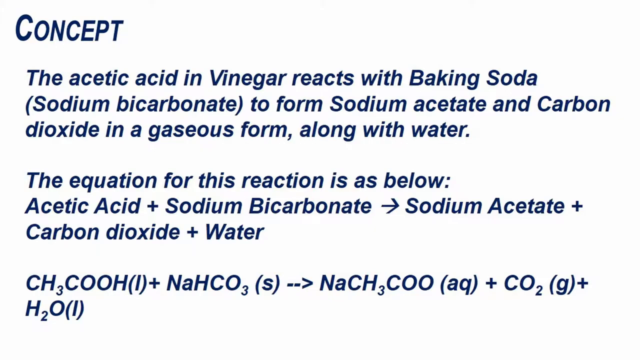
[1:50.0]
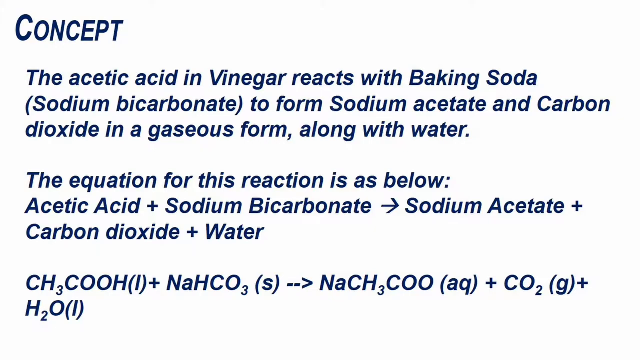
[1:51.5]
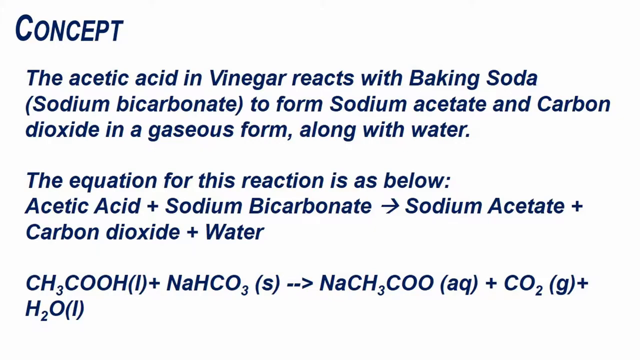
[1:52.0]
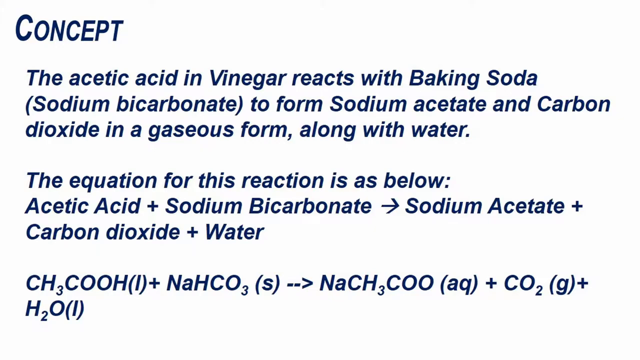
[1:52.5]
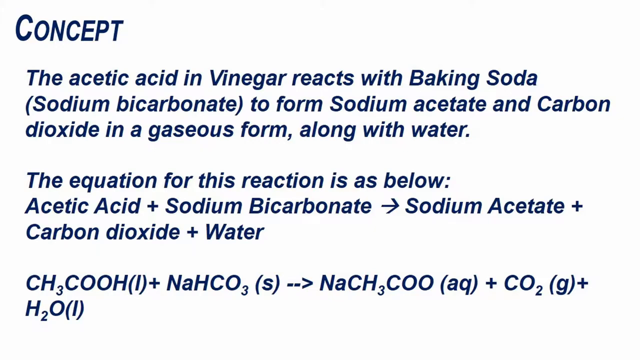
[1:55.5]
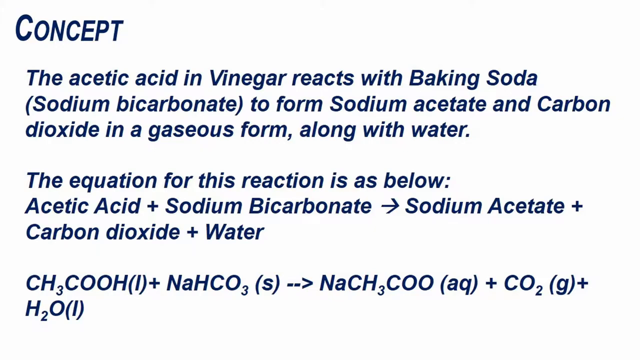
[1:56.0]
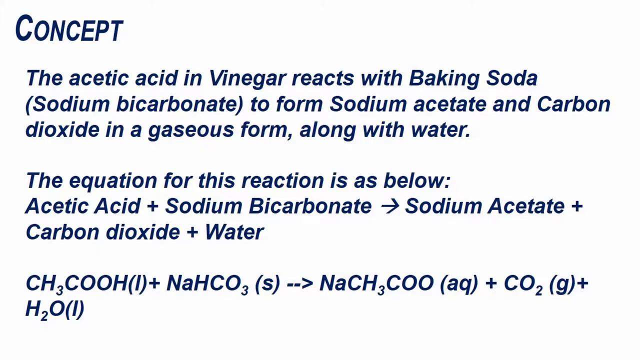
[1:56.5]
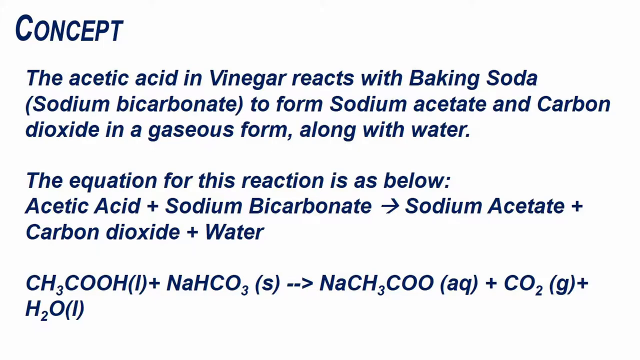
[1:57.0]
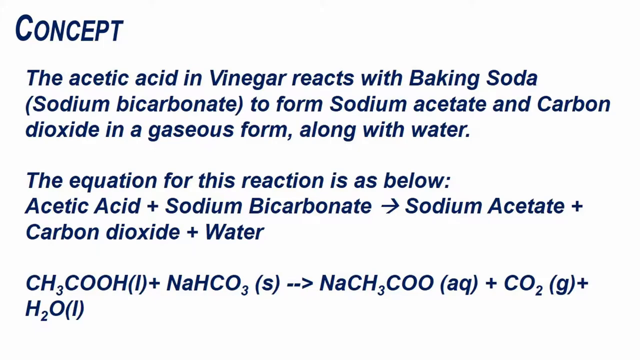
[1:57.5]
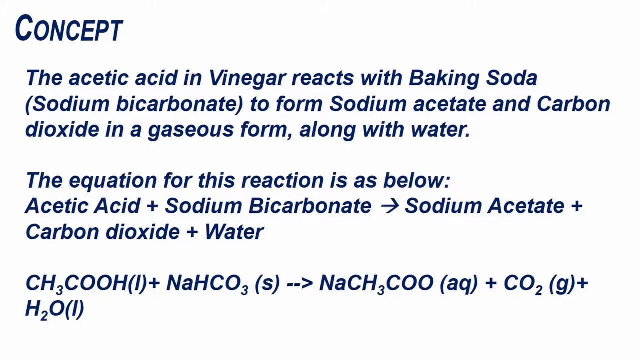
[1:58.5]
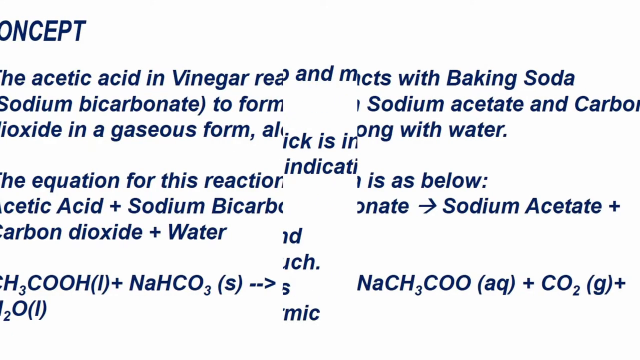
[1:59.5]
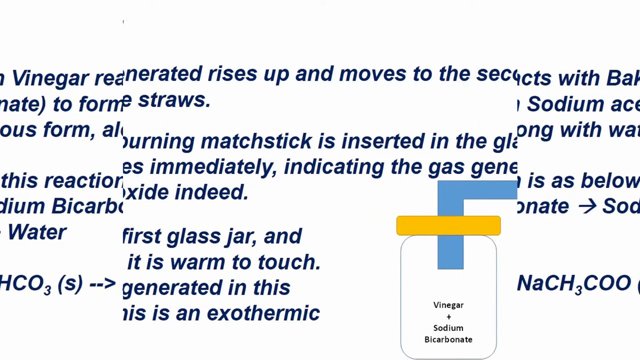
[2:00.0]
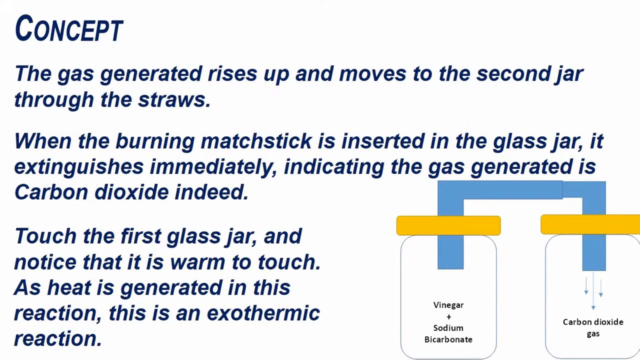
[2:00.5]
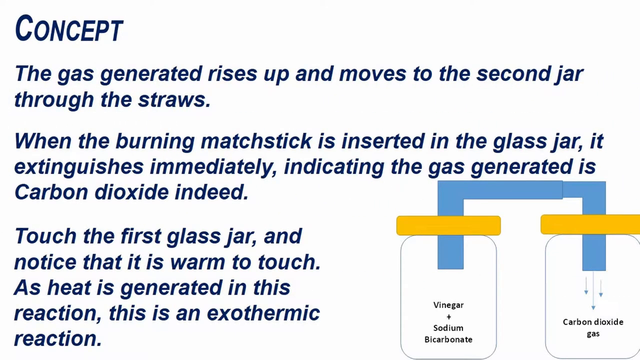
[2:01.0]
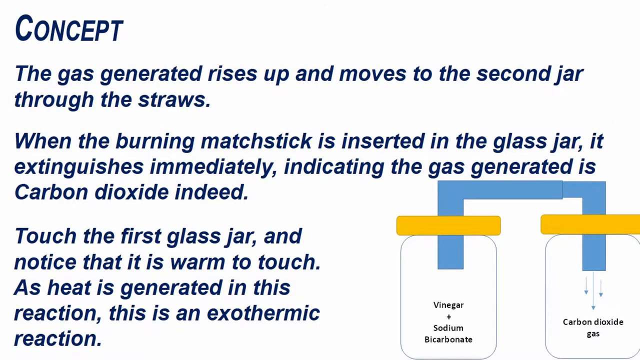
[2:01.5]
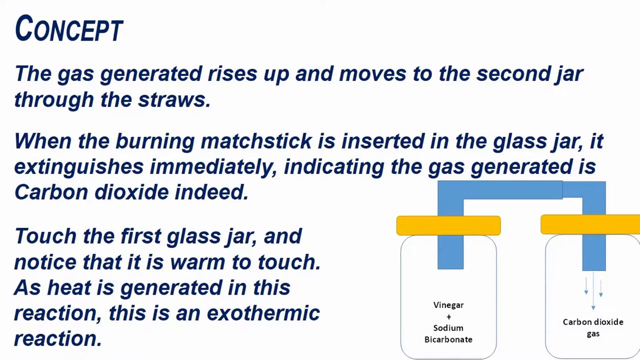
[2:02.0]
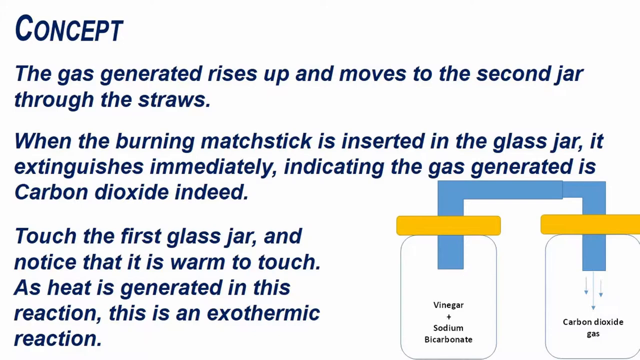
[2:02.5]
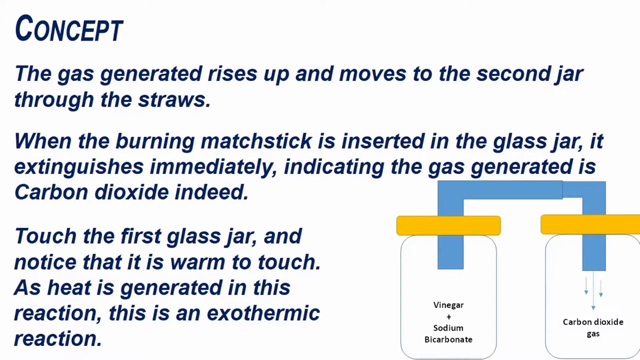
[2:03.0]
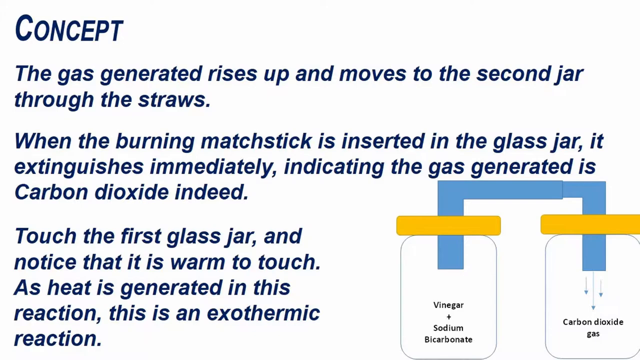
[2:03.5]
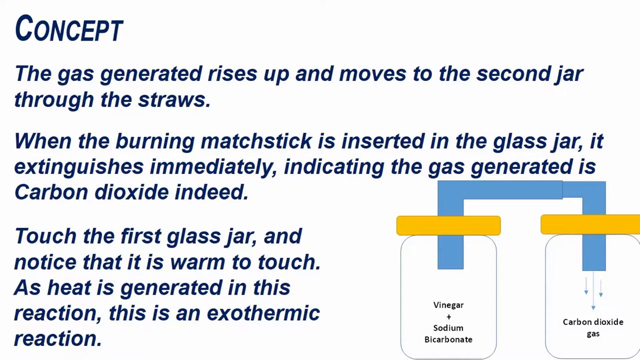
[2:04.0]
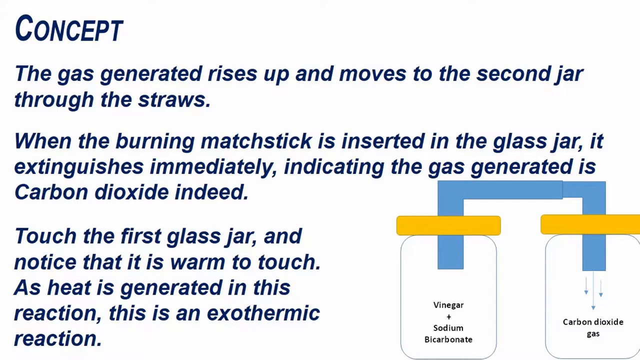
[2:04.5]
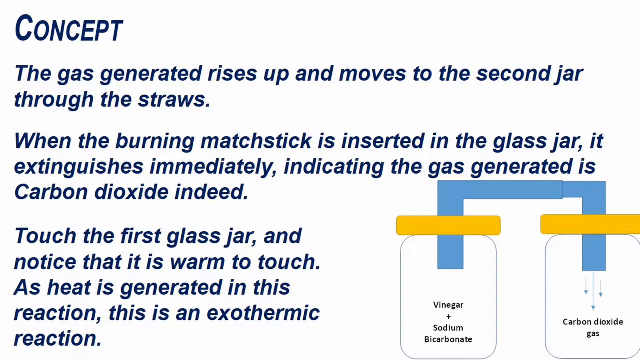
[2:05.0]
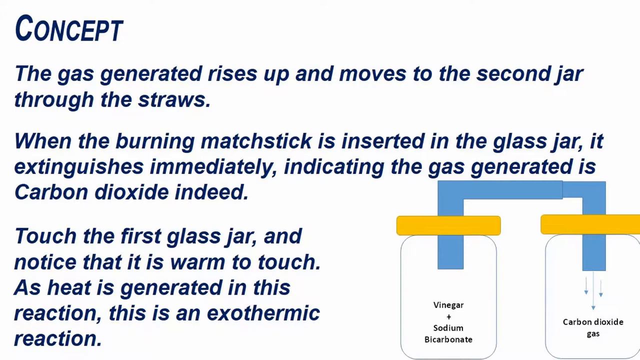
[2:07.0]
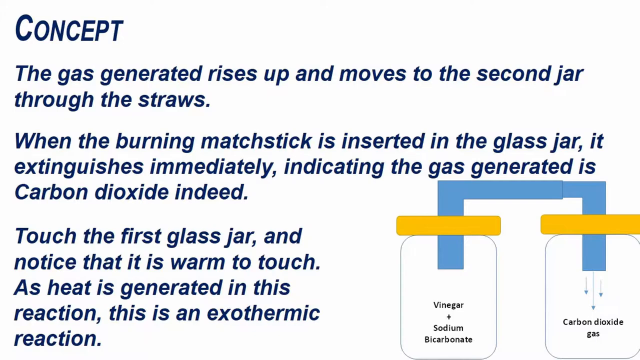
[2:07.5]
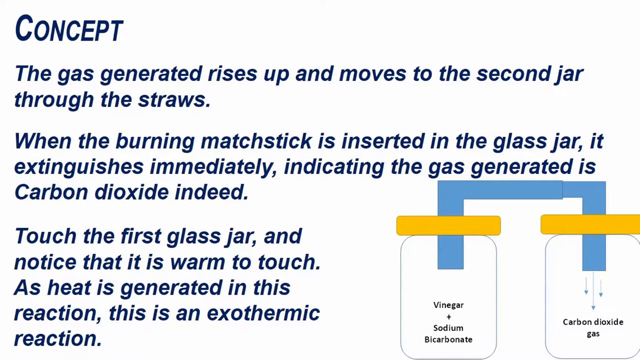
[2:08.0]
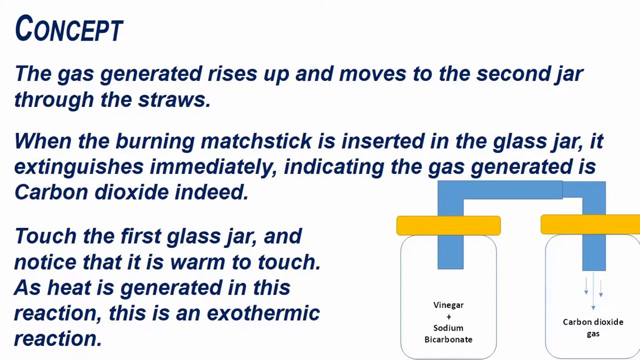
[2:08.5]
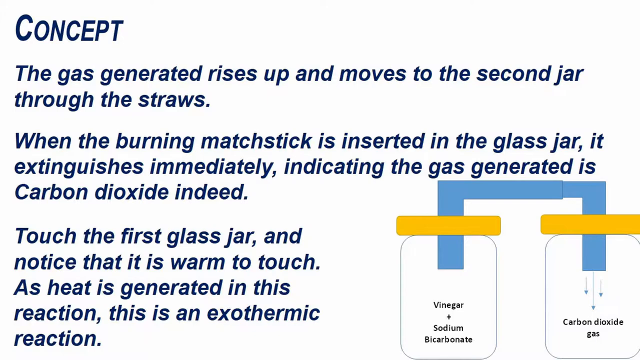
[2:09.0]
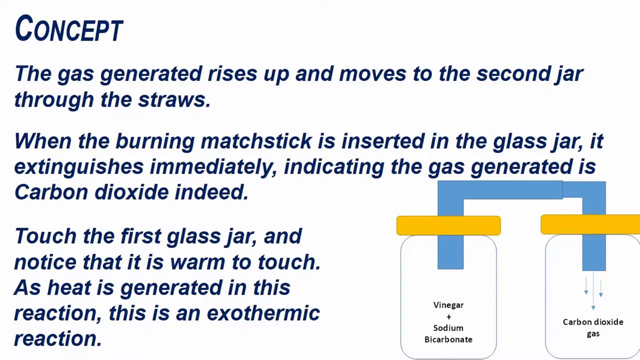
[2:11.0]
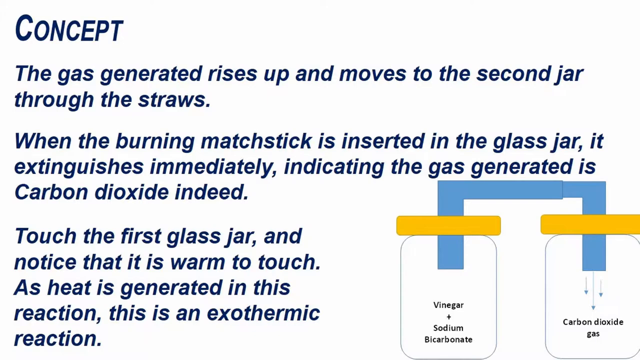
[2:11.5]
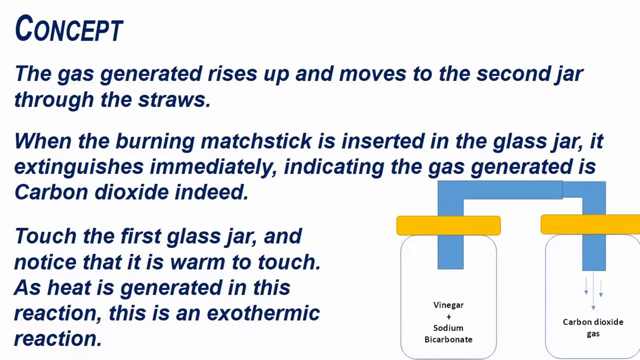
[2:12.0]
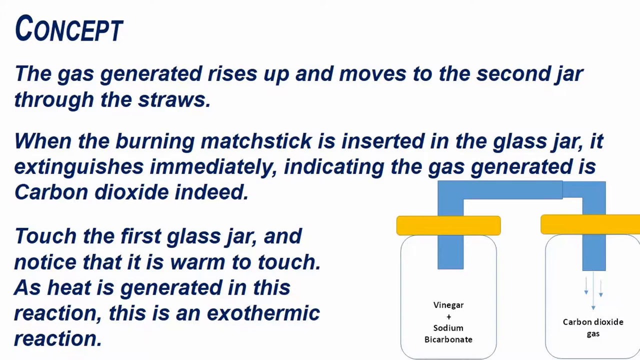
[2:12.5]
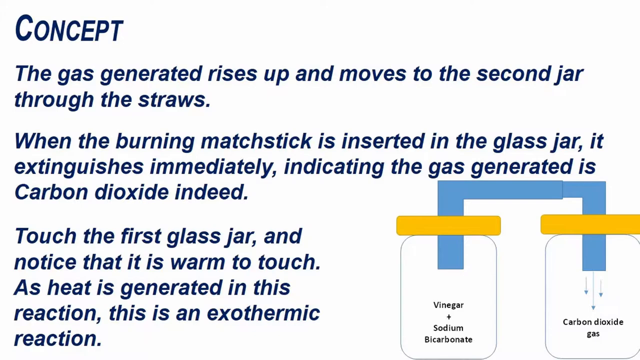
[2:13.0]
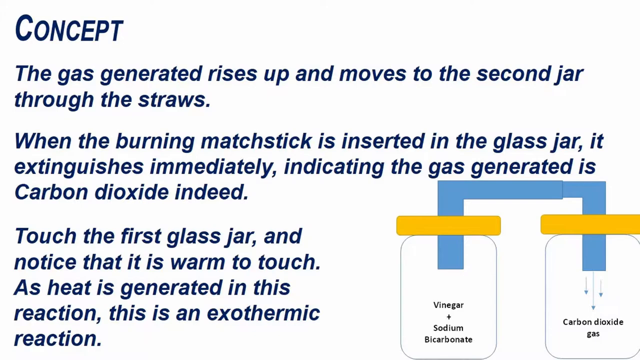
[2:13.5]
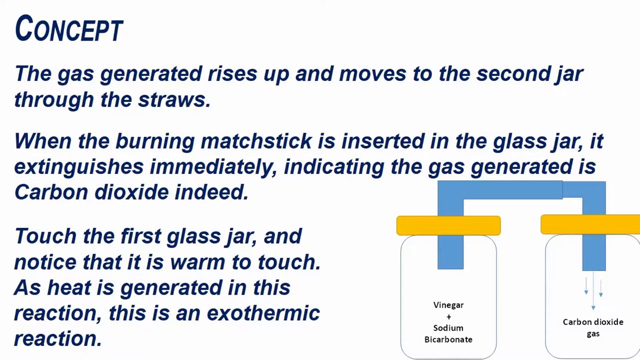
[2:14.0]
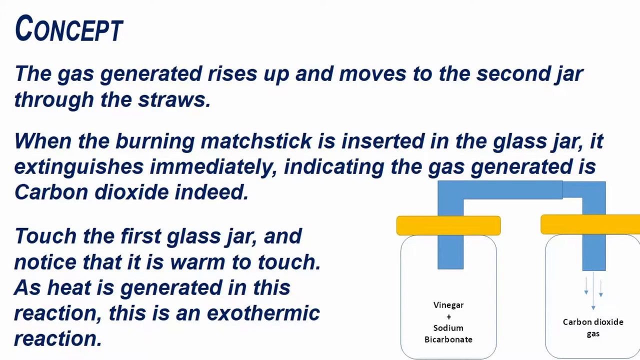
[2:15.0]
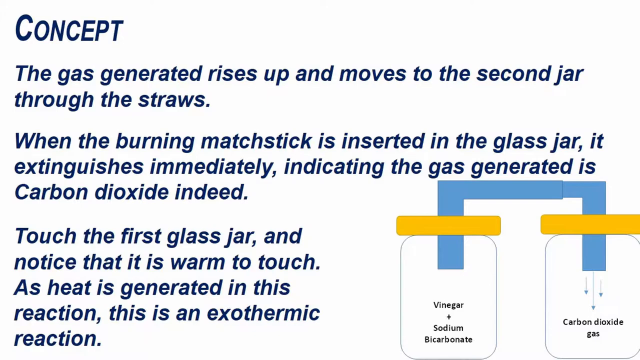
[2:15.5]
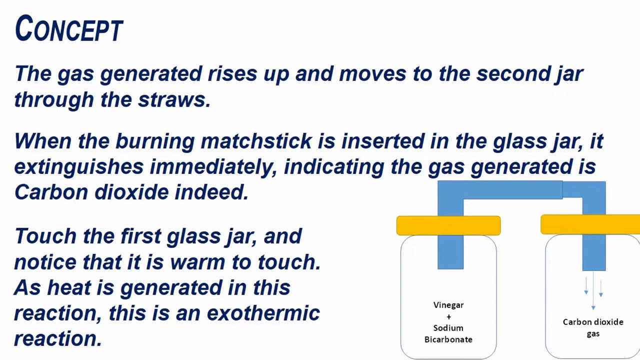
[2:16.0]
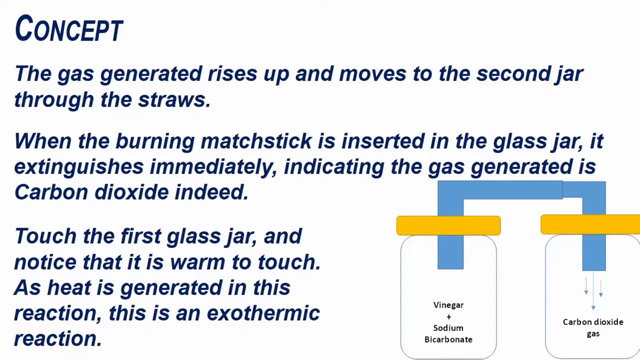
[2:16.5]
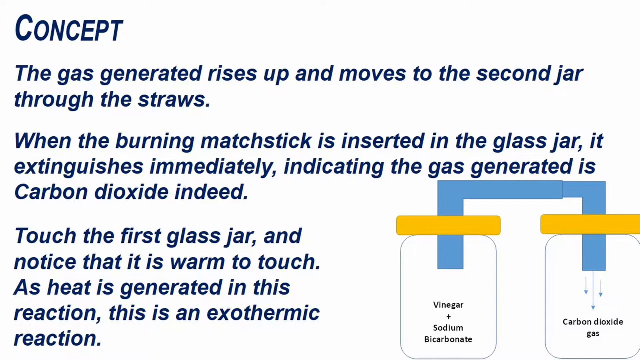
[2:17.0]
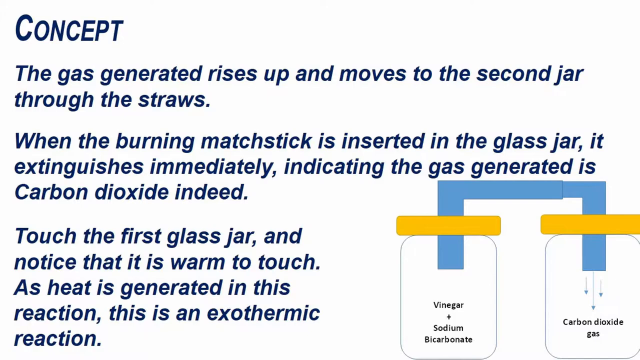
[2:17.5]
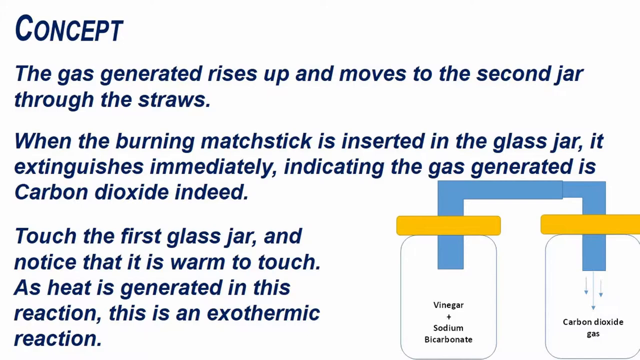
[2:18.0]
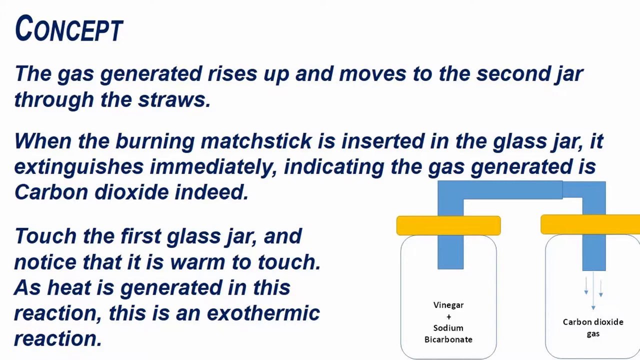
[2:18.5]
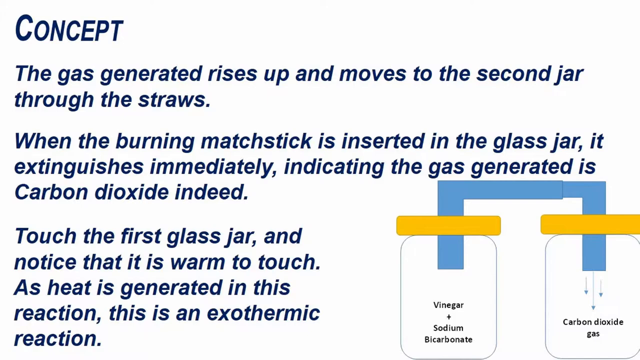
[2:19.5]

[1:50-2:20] The same concept slide with the white background and blue letters is shown, stating that acetic acid in vinegar reacts with baking soda, sodium bicarbonate to form sodium acetate and carbon dioxide in a gaseous form. The video then moves to the next slide, with a white background, blue lettering and a diagram in the corner. It reads "the gas generated rises up and moves to the second jar through the straws when the burning matchsticks is inserted into the glass jar and extinguishes immediately, indicating the gas generated is carbon dioxide indeed. Touch the first glass and notice that it is warm to the touch as heat is generated in this reaction. This is an exothermic reaction." The diagram in the corner looks to be two mason jars with colors on them and a straw that goes to the top. On the right-hand side it says "carbon dioxide" with arrows pushing down, and on the left-hand side it says "vinegar + sodium bicarbonate".